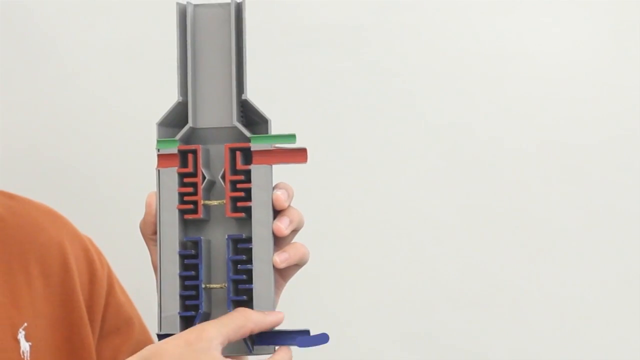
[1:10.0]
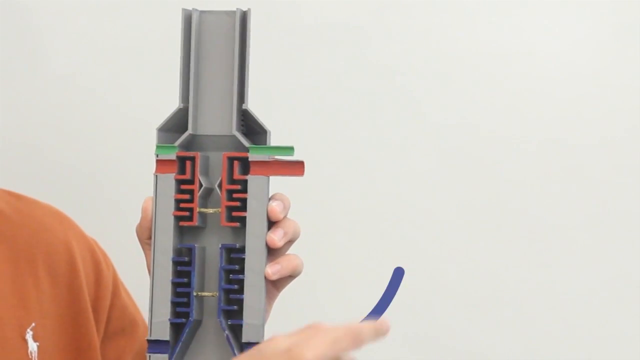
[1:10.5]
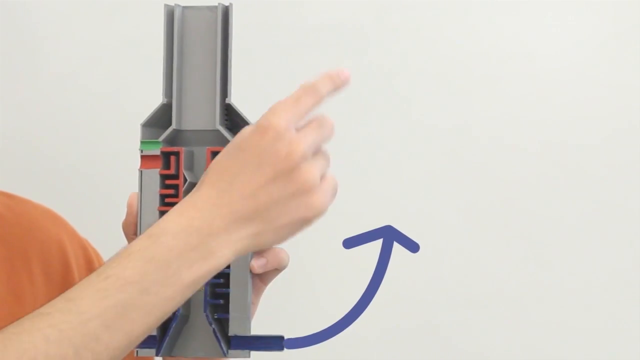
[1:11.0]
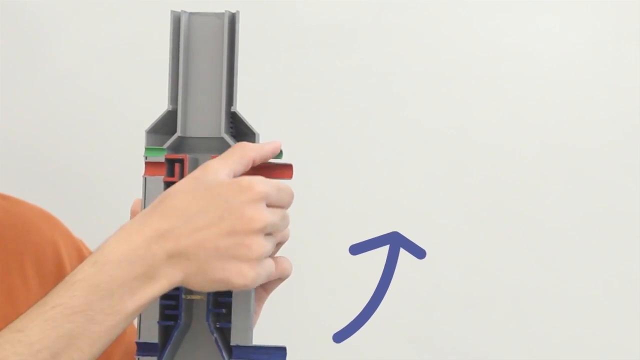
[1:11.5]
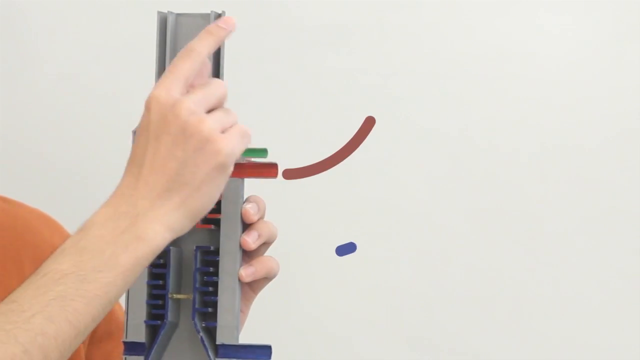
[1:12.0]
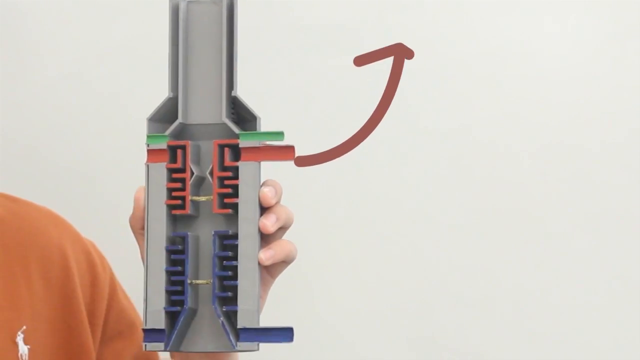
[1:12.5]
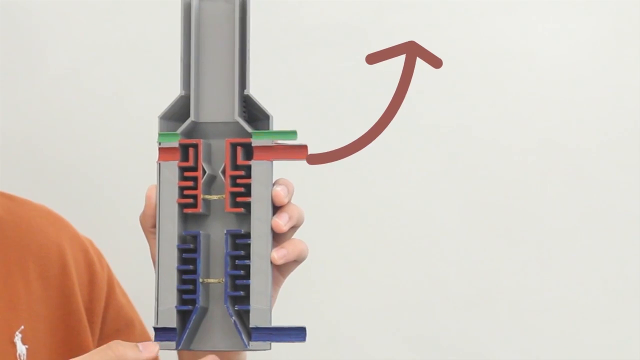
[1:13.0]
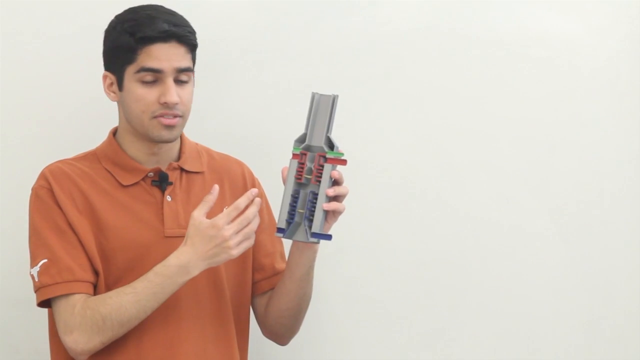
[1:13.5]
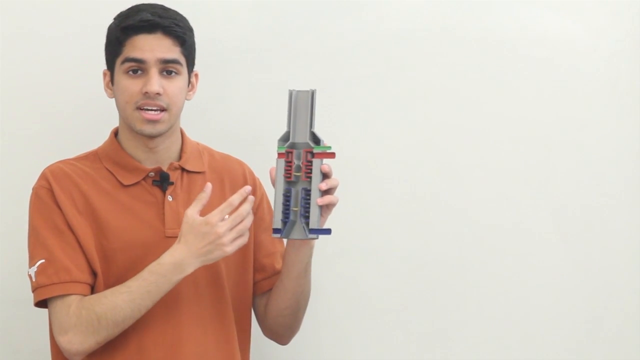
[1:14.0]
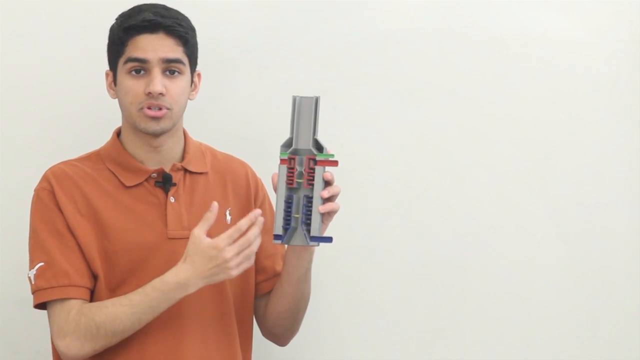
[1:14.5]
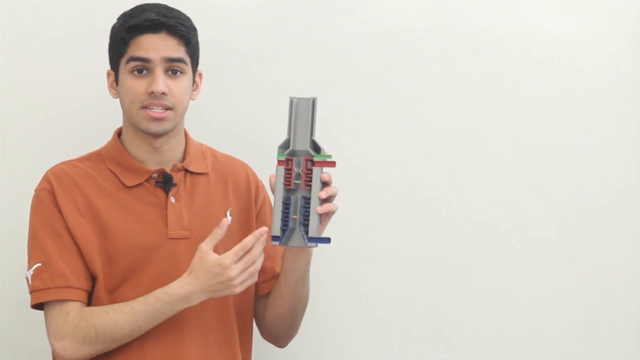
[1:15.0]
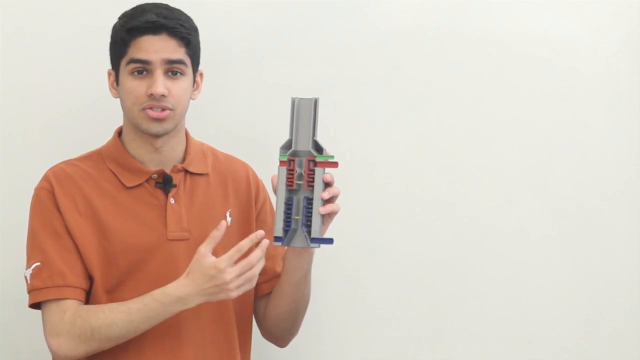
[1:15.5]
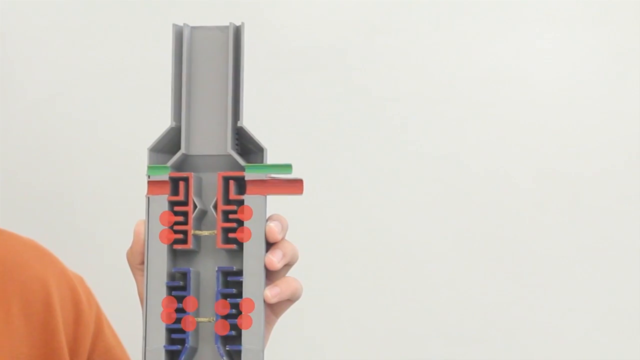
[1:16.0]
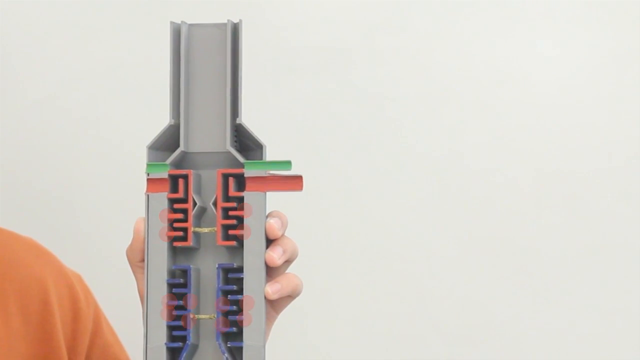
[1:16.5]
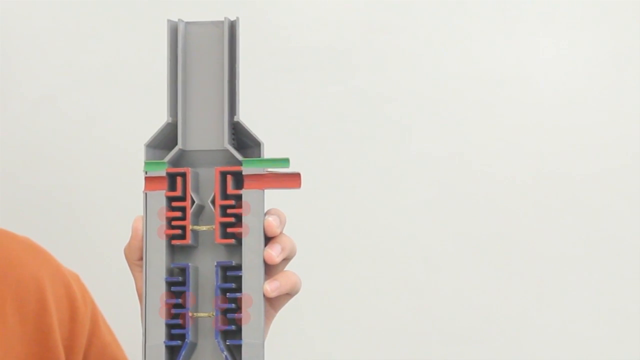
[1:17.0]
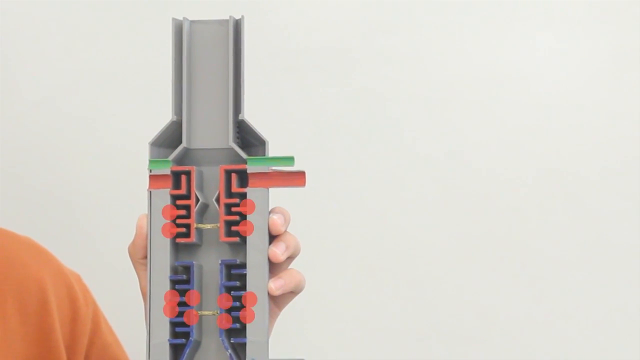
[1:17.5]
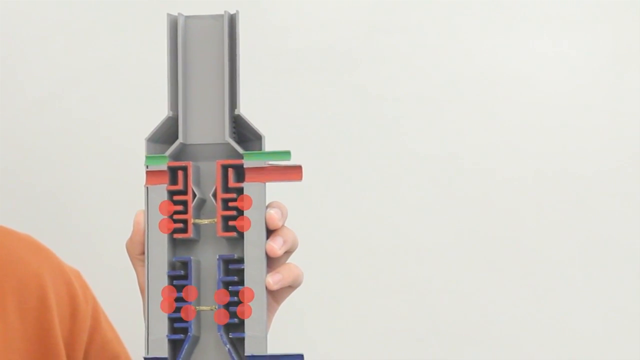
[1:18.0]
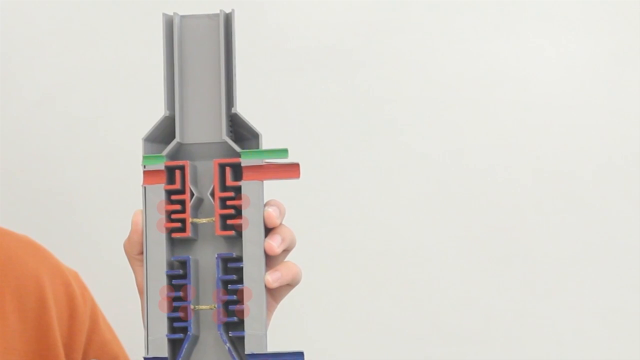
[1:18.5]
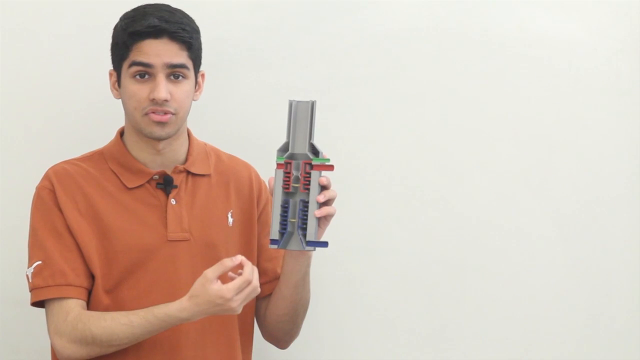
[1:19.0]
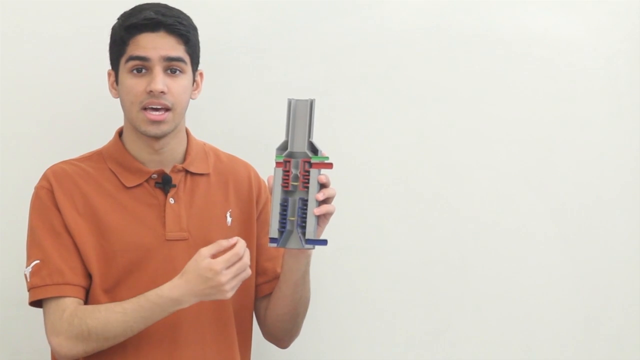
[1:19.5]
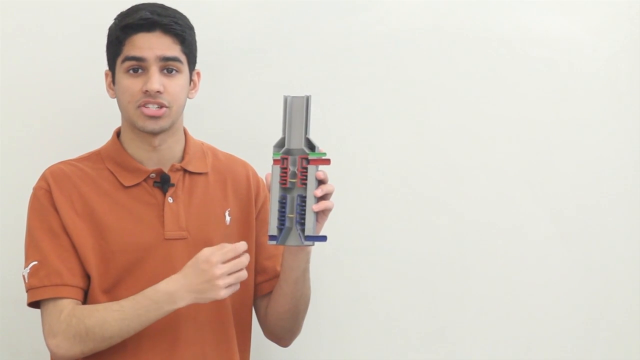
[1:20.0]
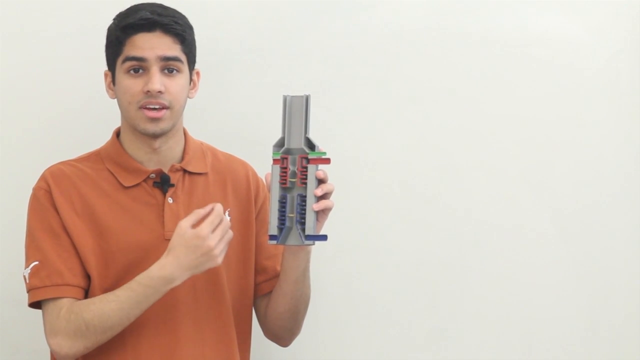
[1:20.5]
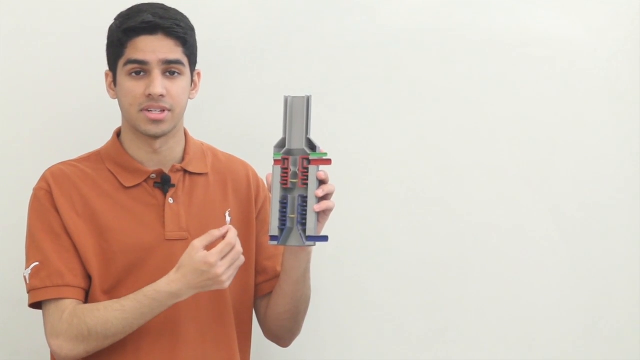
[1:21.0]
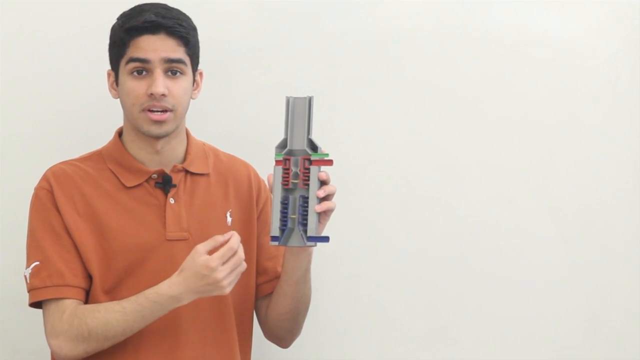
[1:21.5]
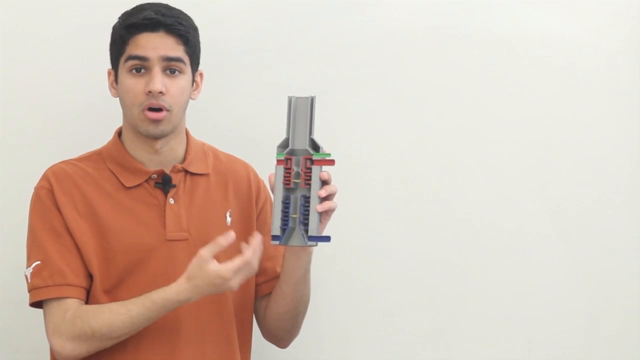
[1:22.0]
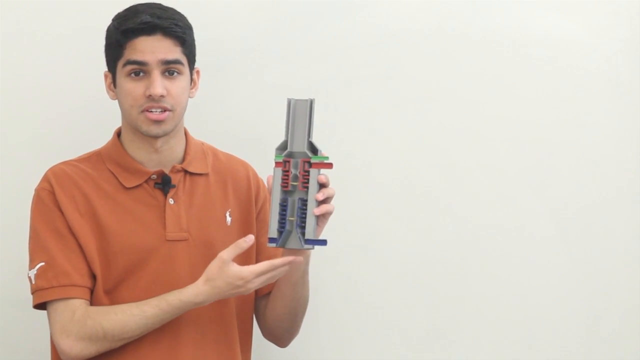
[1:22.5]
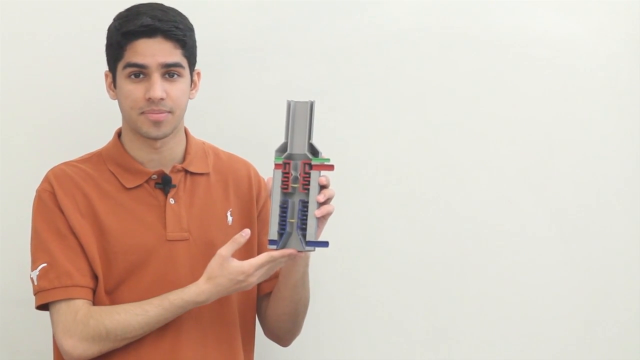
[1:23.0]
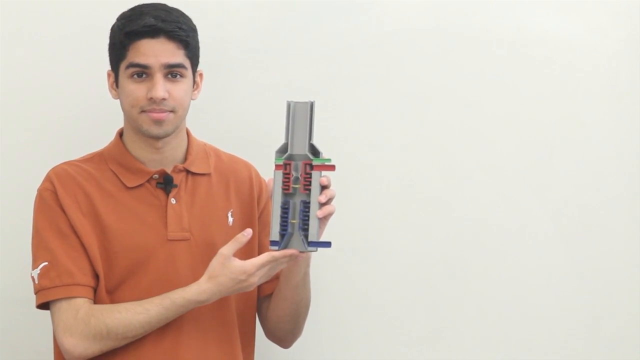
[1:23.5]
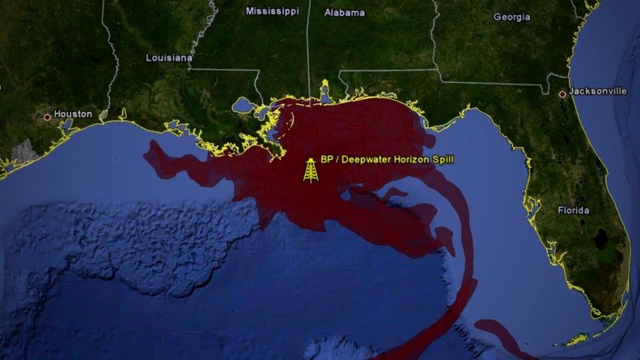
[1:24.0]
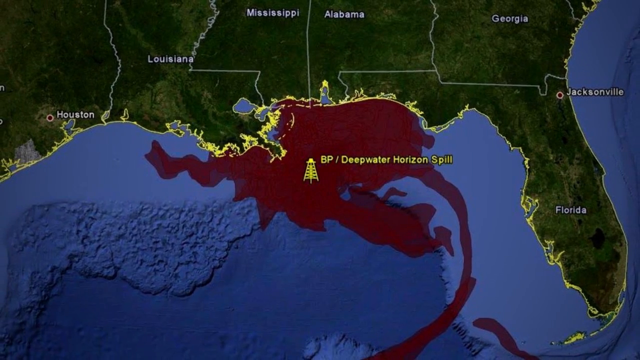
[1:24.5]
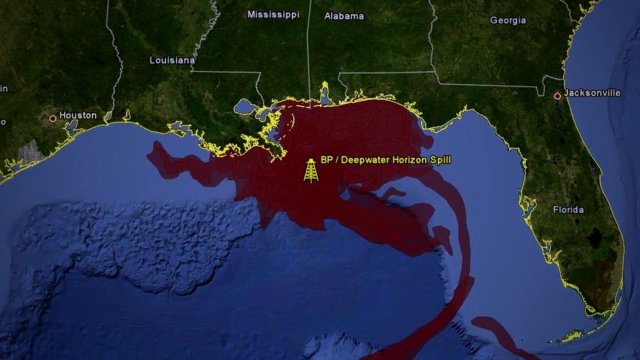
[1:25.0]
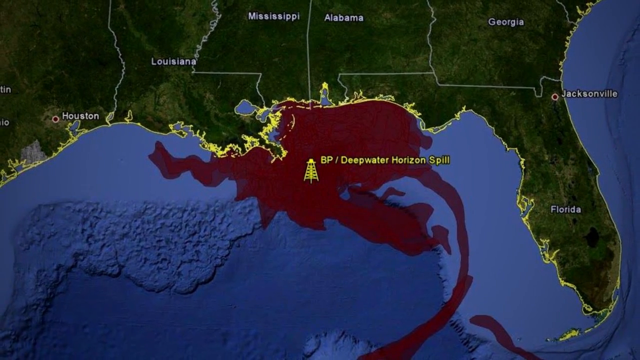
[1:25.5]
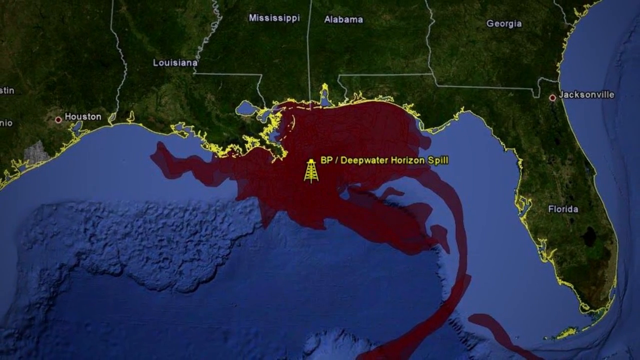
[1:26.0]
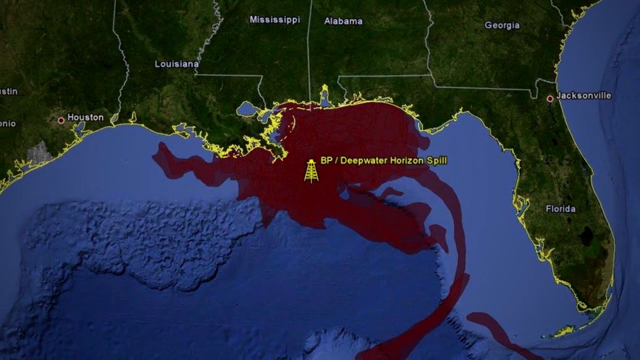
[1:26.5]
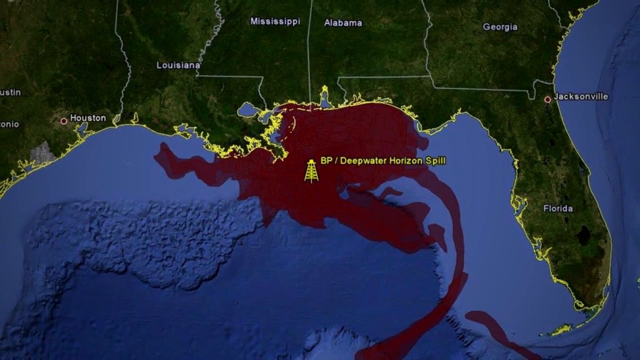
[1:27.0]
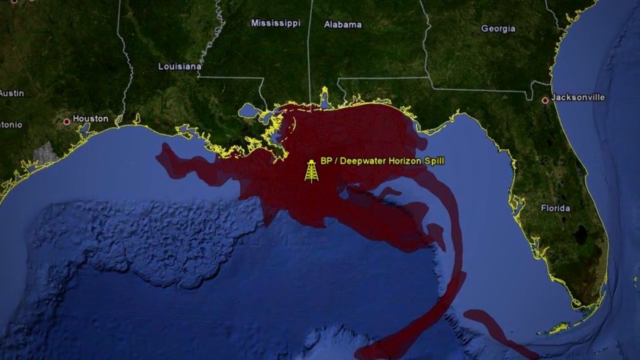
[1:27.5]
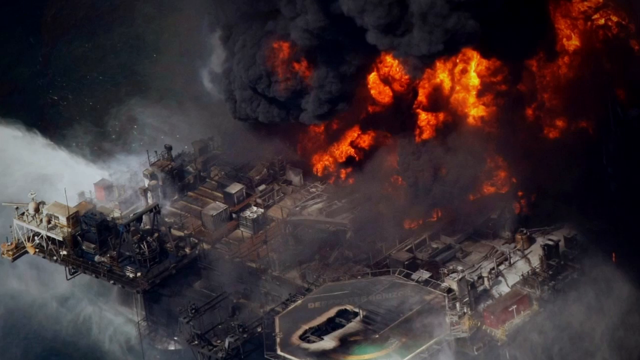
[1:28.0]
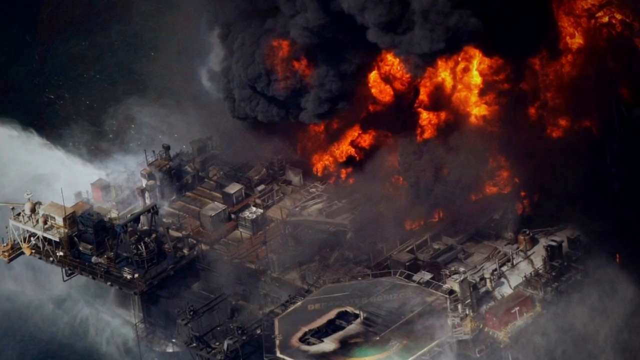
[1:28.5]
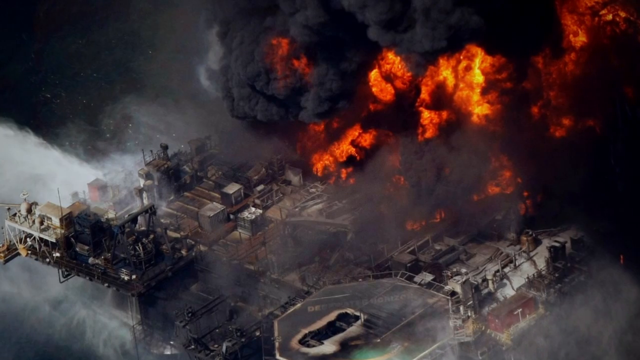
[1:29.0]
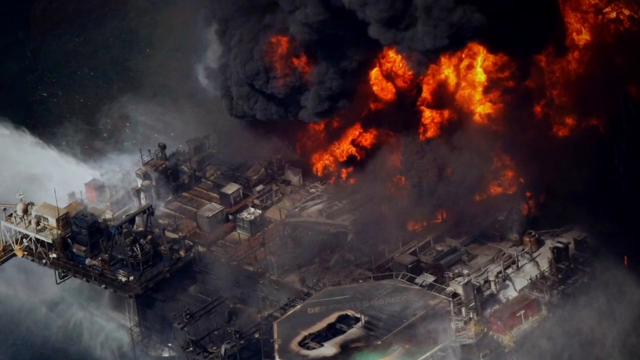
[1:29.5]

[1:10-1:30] The inventor of the BP device goes through several points about how it works, how it must be used and where to locate it. A disaster scene with burning is shown.